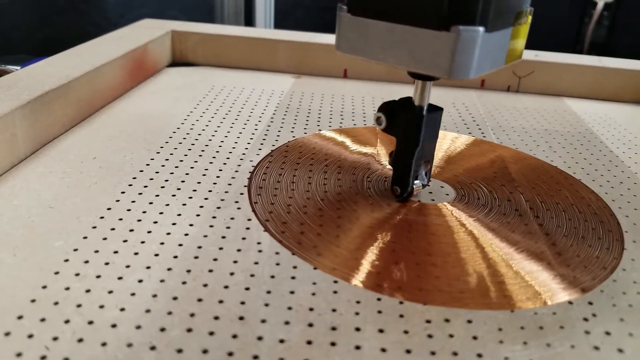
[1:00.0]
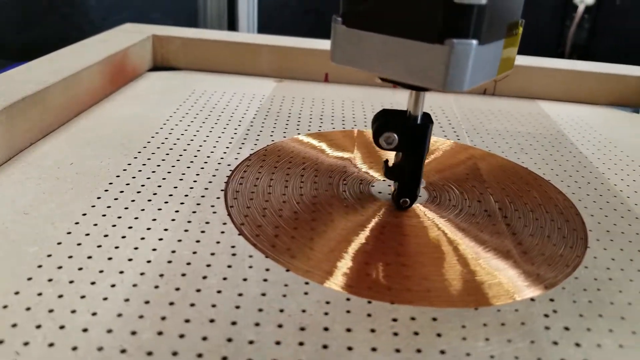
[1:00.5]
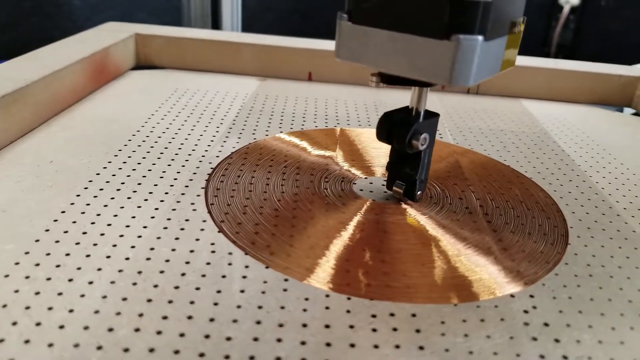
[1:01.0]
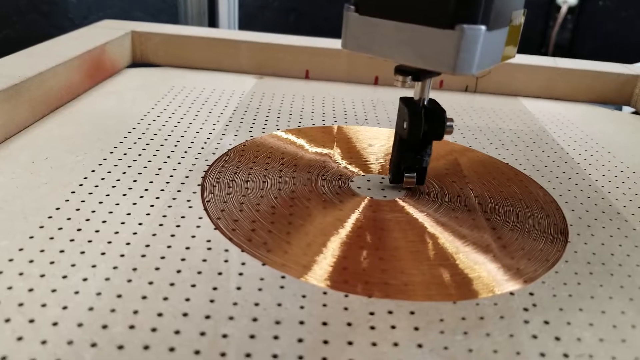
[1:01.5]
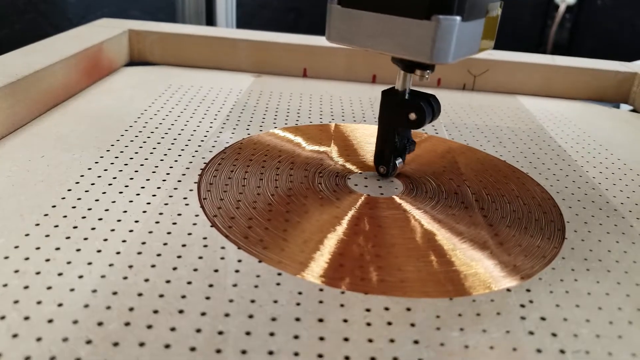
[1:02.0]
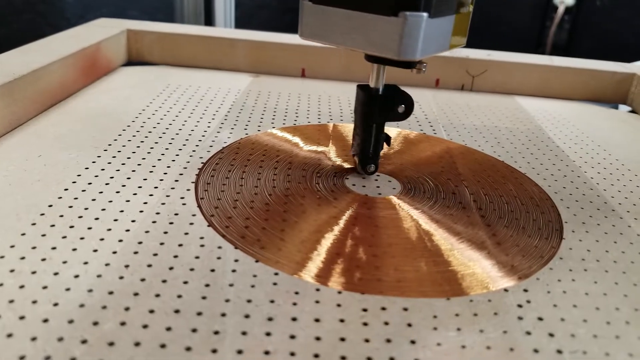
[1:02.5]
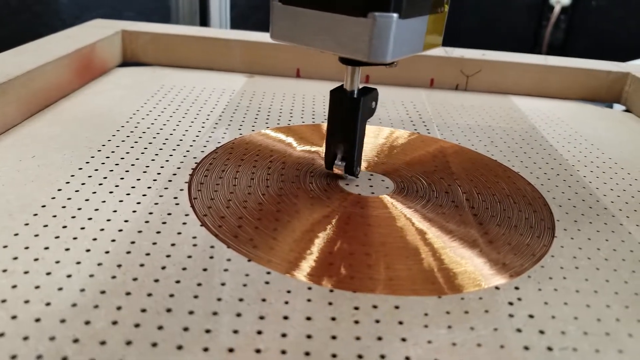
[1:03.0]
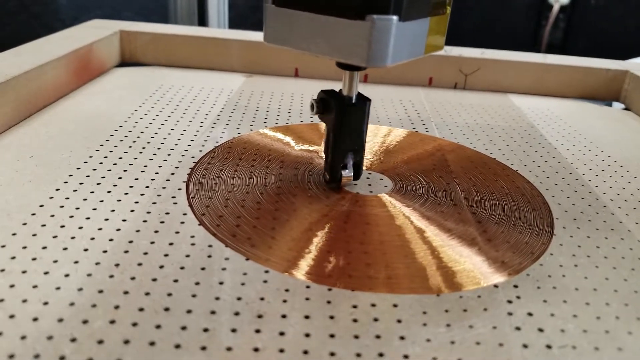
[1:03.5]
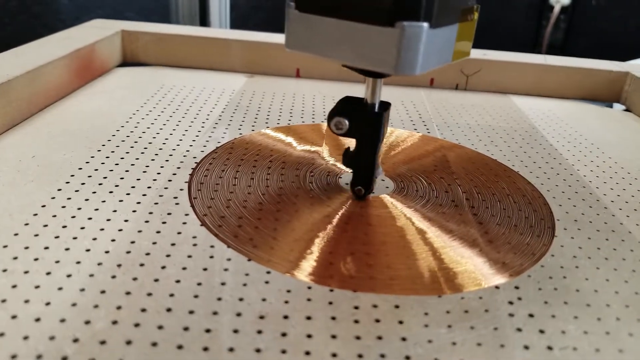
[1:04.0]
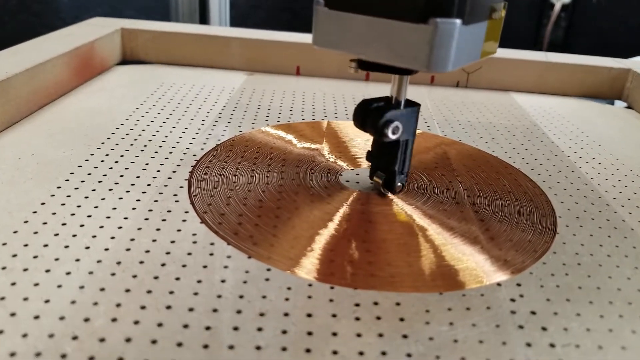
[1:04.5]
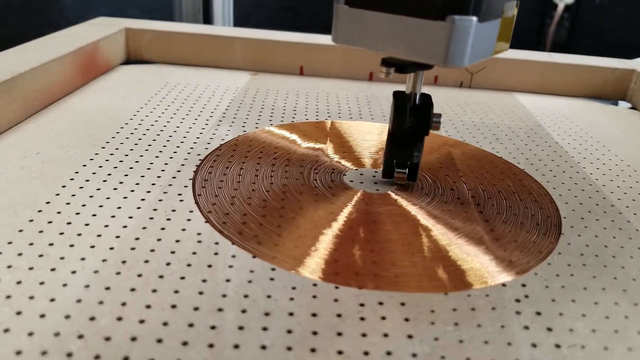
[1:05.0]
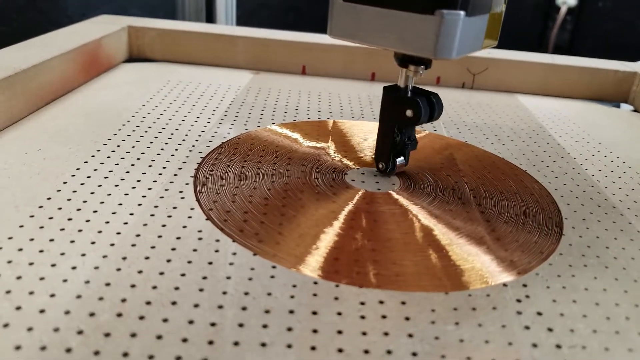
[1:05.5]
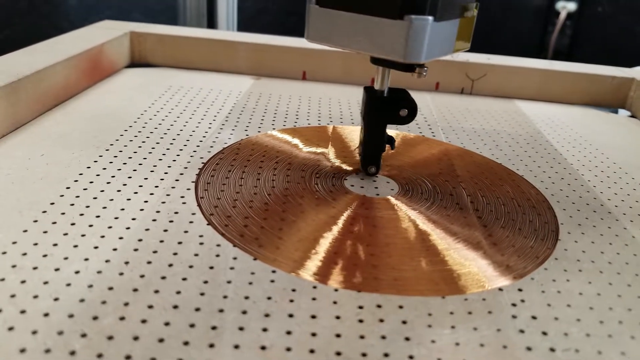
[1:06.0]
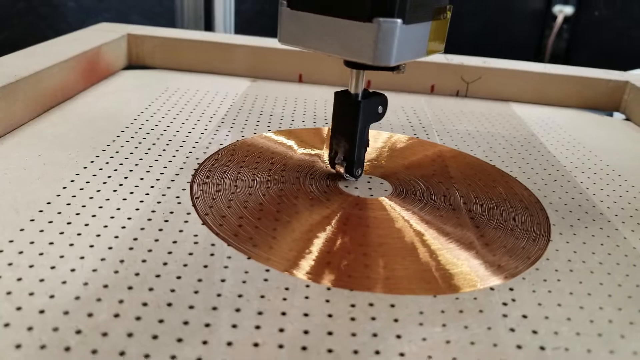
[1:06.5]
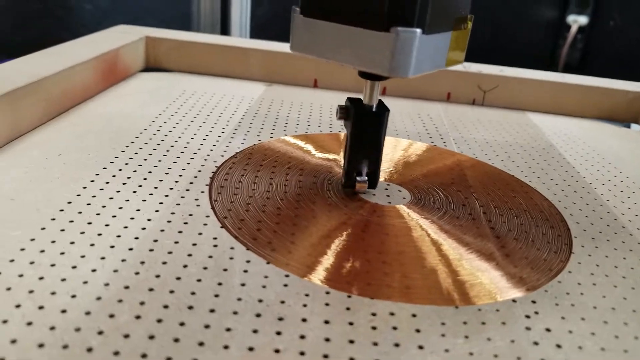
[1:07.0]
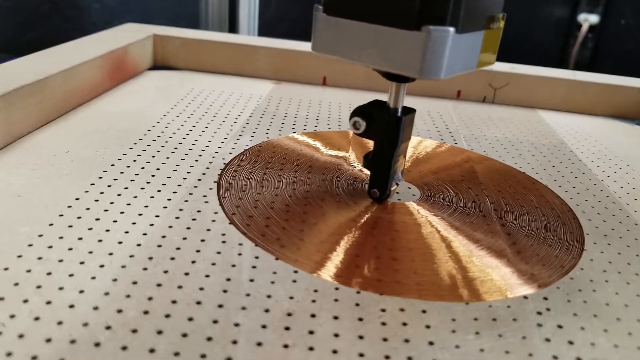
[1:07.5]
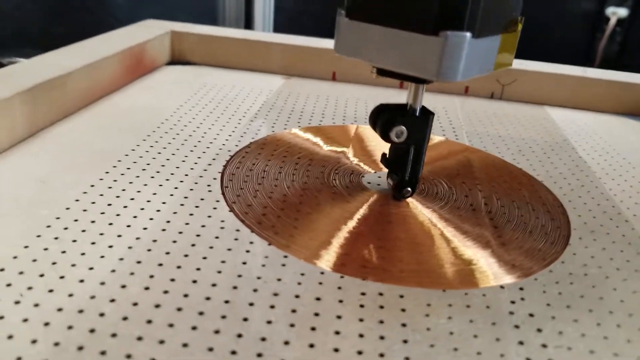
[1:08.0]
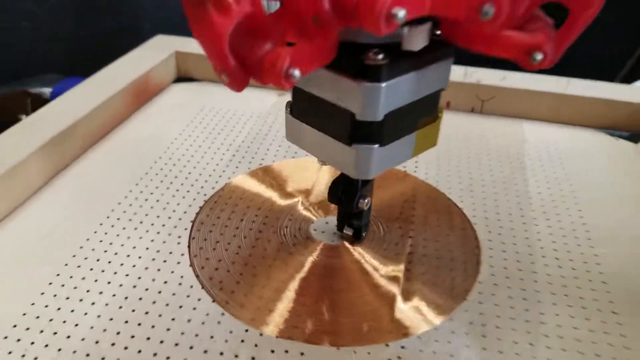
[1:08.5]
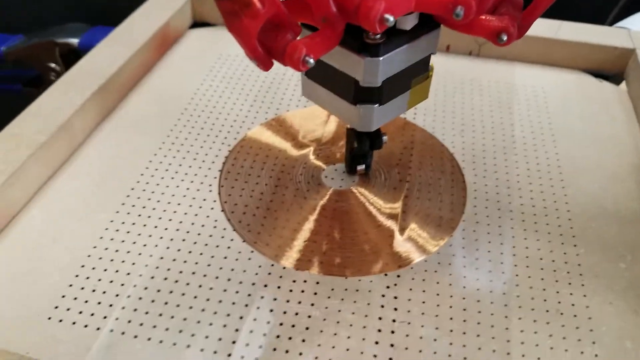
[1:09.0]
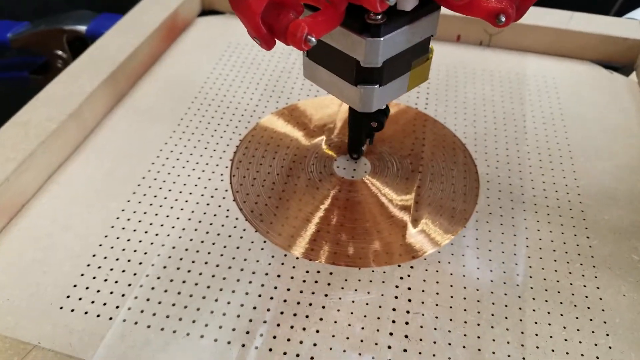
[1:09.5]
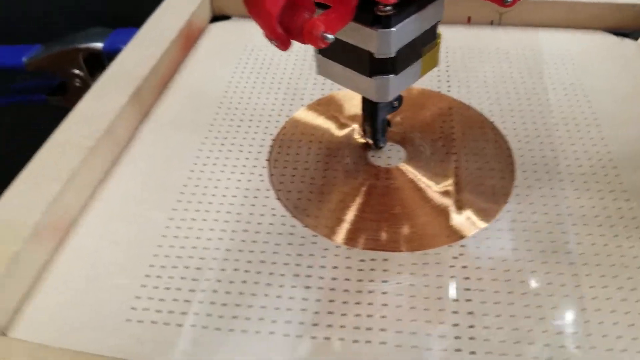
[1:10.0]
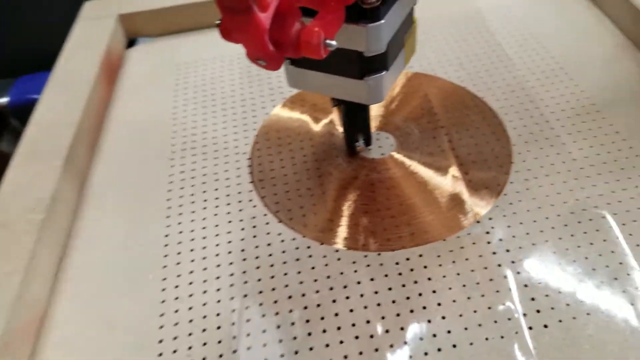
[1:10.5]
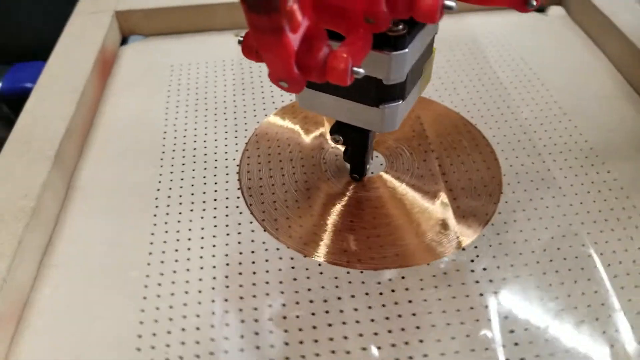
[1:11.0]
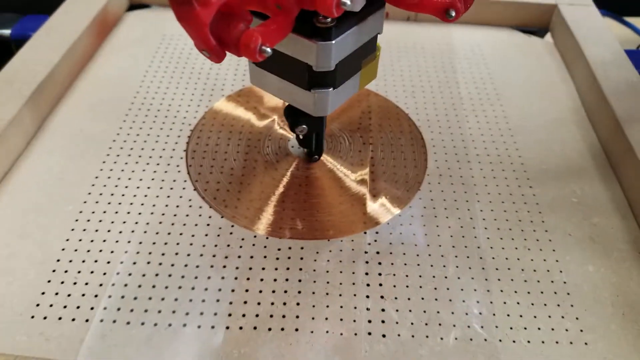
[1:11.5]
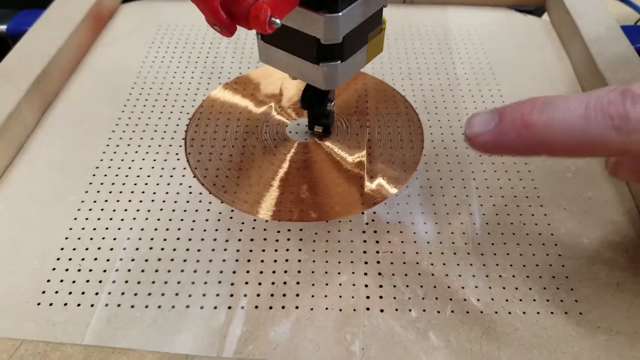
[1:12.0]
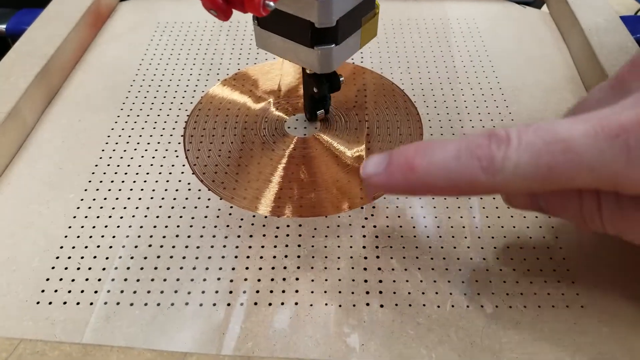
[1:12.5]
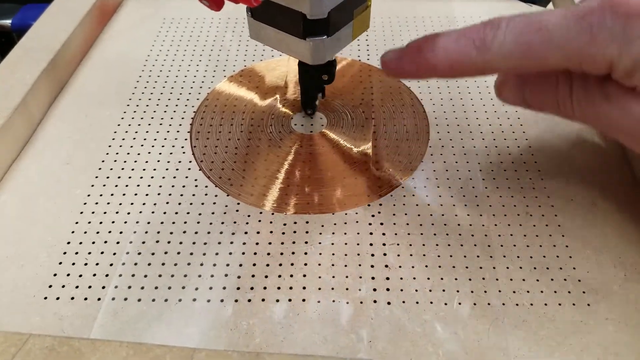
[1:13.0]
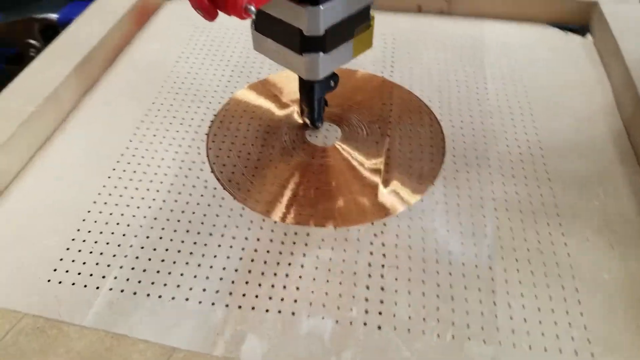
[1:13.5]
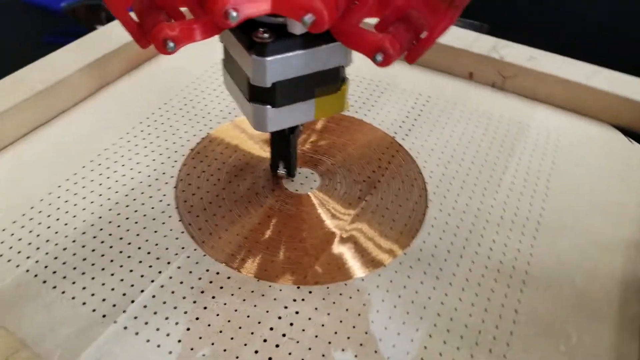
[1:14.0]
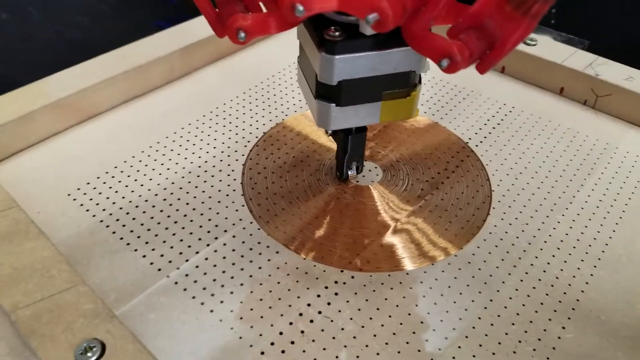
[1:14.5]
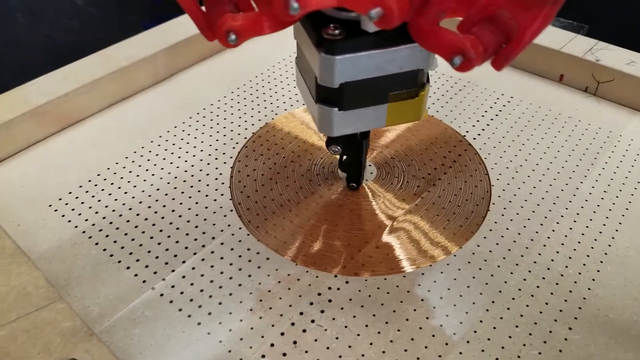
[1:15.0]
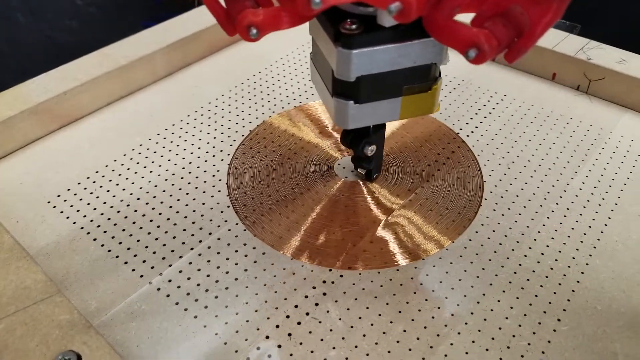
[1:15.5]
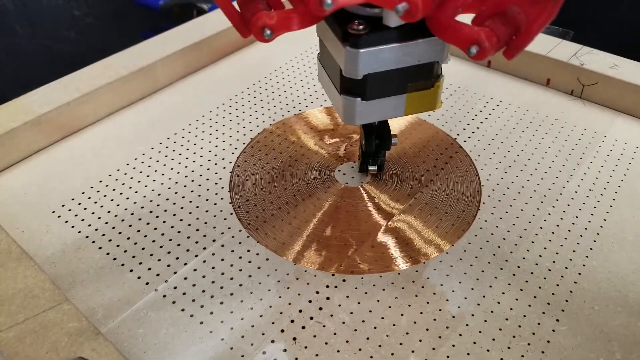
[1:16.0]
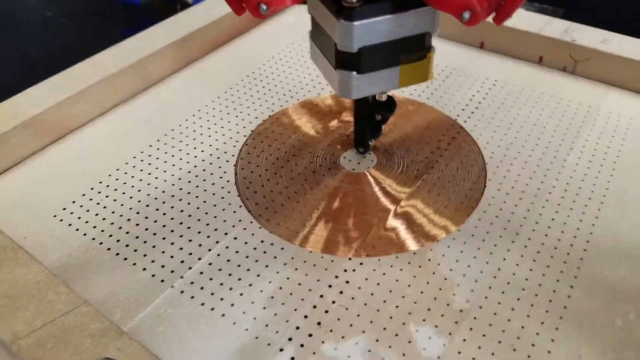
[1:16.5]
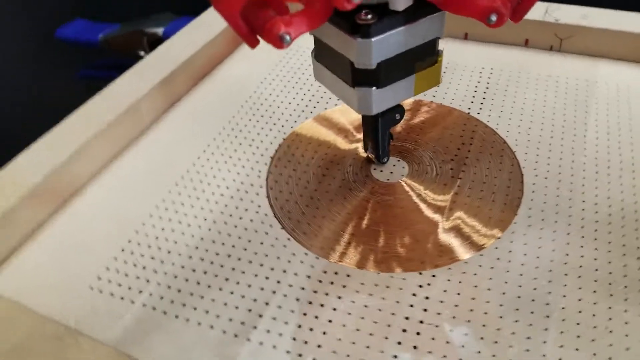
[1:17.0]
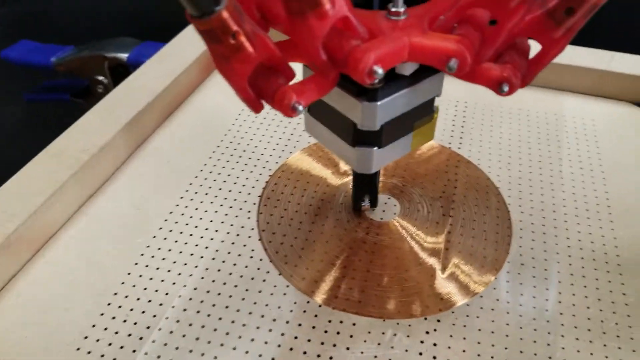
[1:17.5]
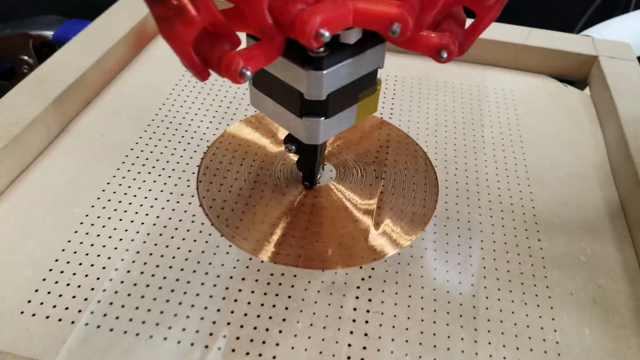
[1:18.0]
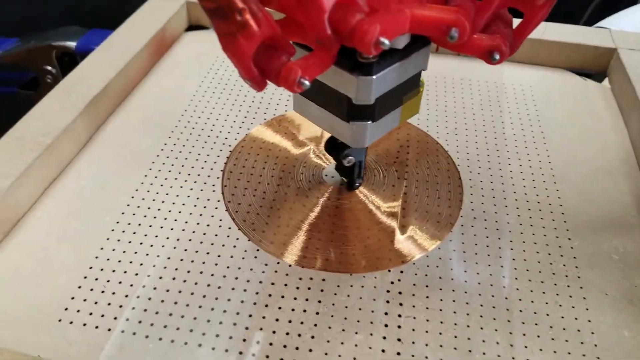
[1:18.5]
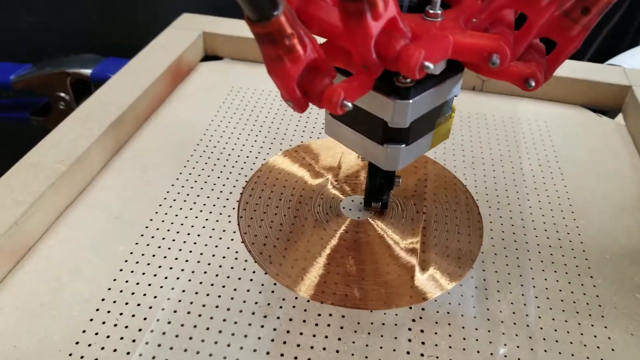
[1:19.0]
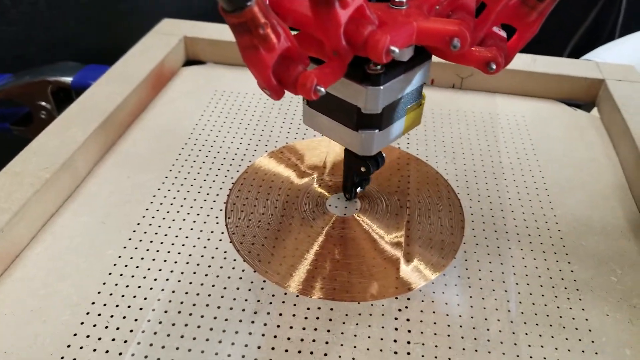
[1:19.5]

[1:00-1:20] Someone seems to be capturing an aerial view, filming the table and the machine from different points of view as it makes circular motions on the gold part. At one point, someone's finger appears, pointing at a specific area on the table or on the machine. After zooming in and out several times, the camera ends up in a view similar to the one at the beginning. The surrounding areas, the other sides of the table, and the wall are not visible.